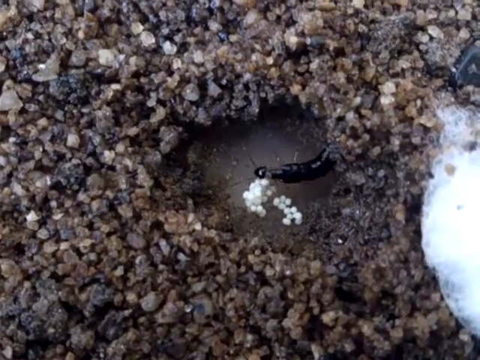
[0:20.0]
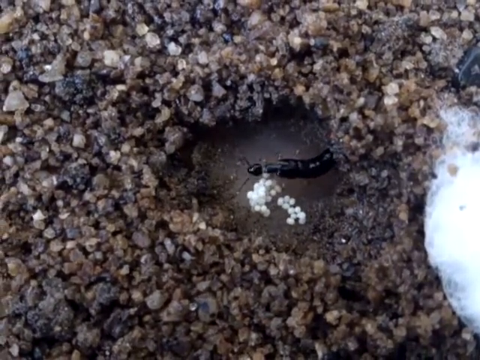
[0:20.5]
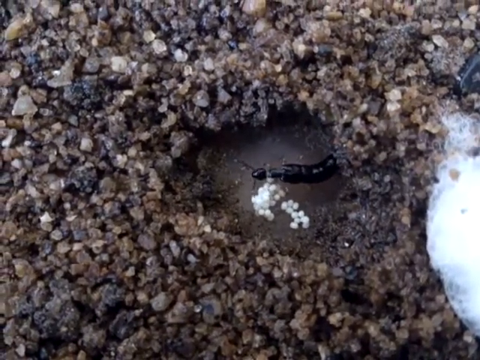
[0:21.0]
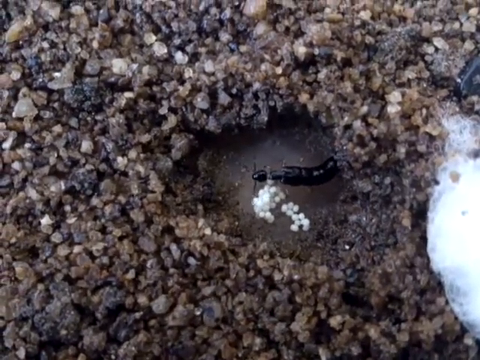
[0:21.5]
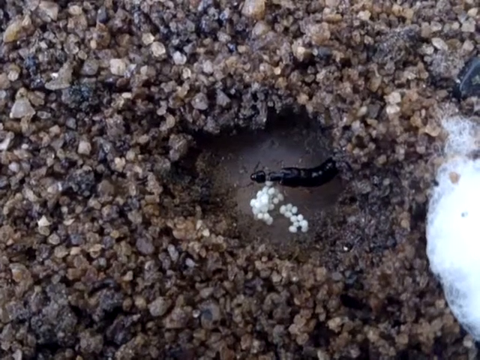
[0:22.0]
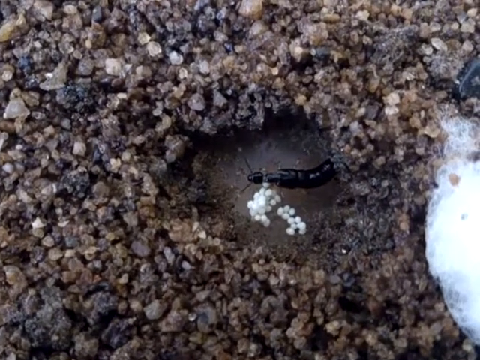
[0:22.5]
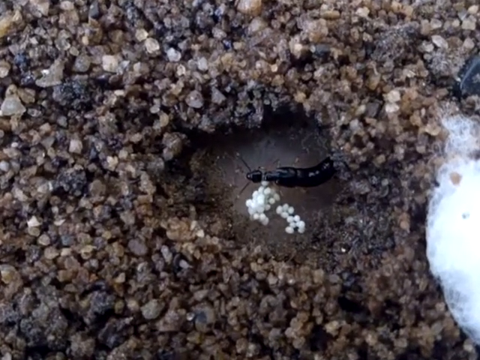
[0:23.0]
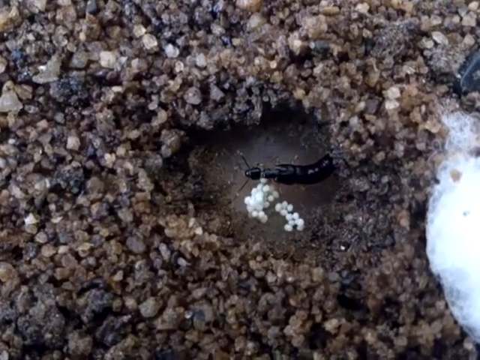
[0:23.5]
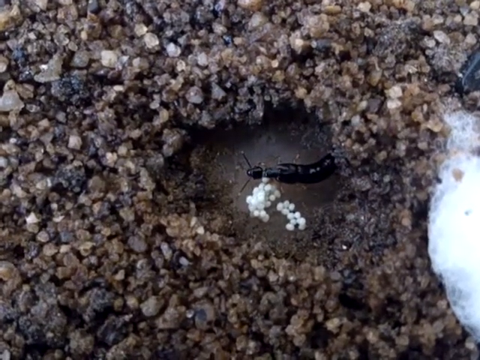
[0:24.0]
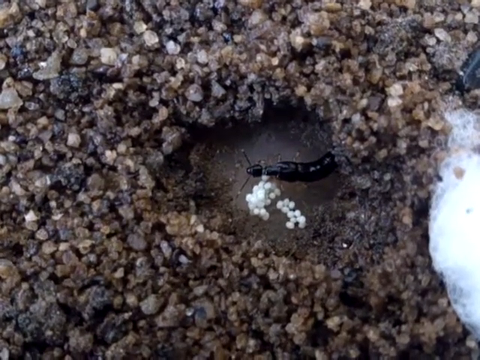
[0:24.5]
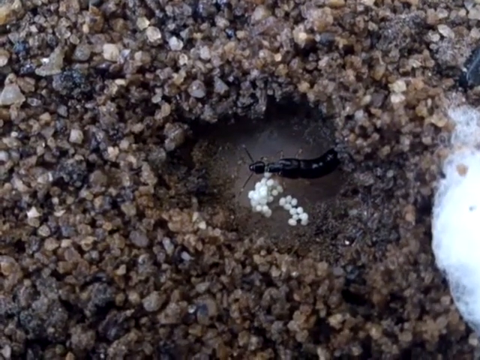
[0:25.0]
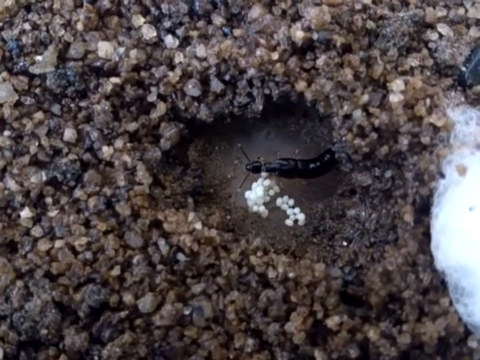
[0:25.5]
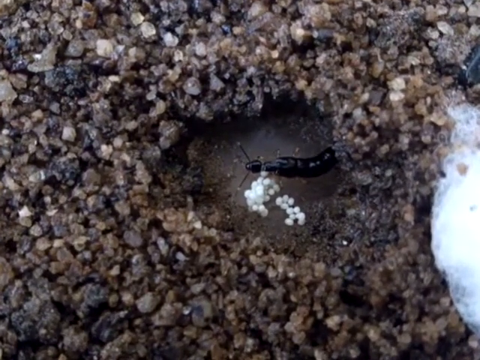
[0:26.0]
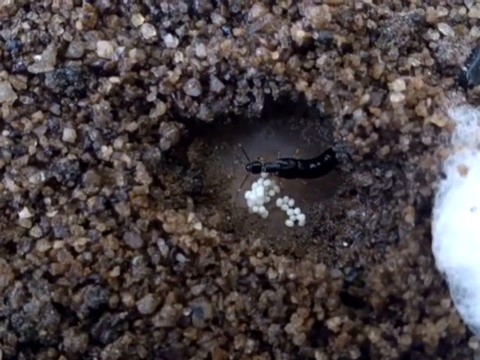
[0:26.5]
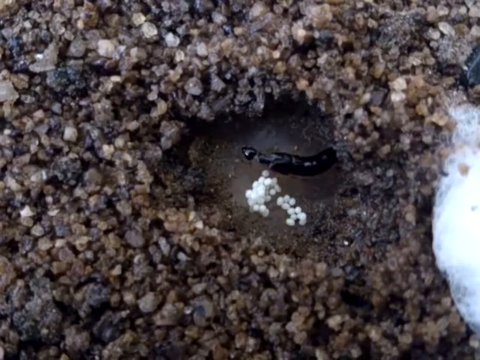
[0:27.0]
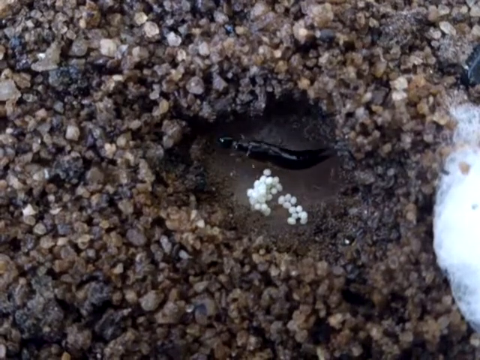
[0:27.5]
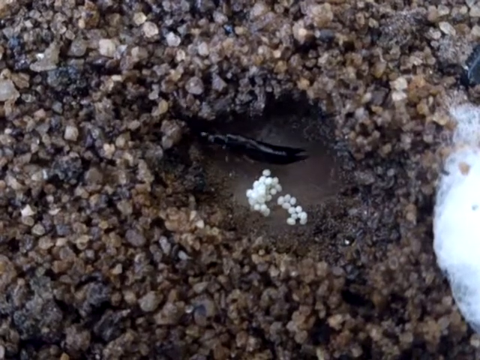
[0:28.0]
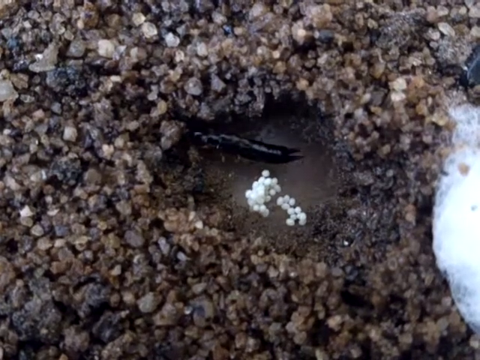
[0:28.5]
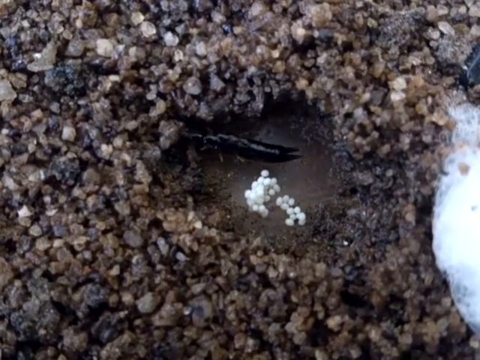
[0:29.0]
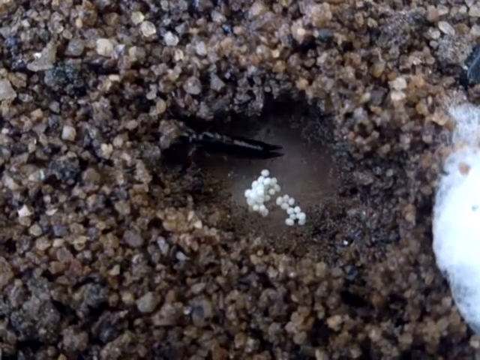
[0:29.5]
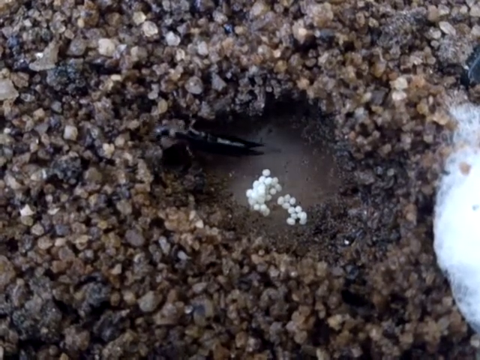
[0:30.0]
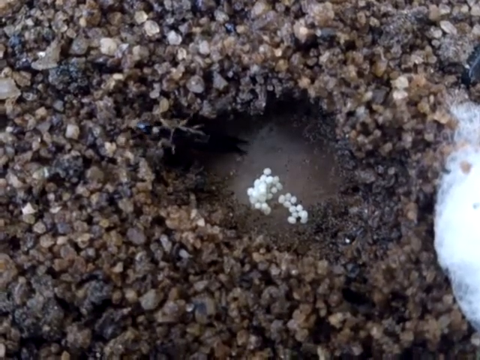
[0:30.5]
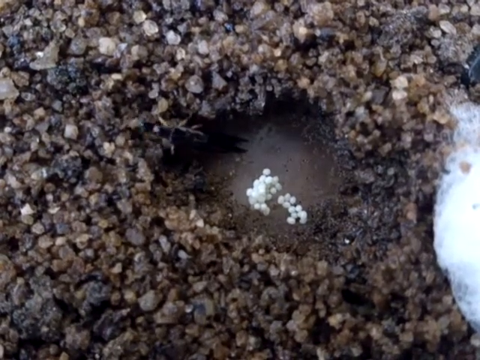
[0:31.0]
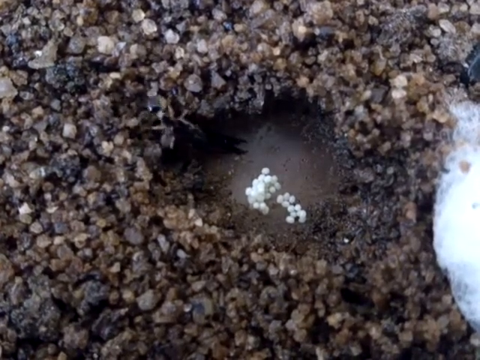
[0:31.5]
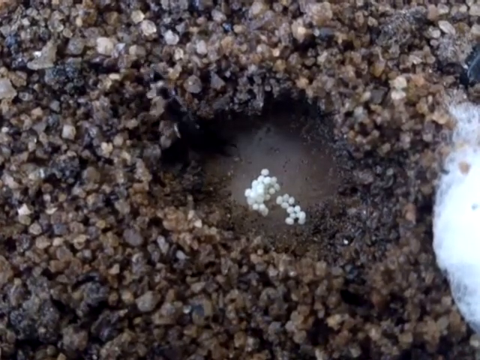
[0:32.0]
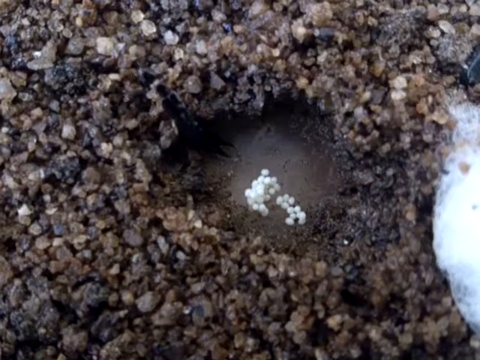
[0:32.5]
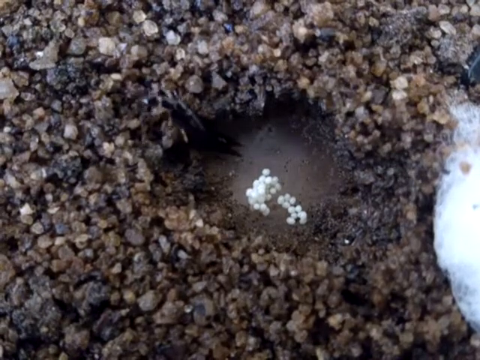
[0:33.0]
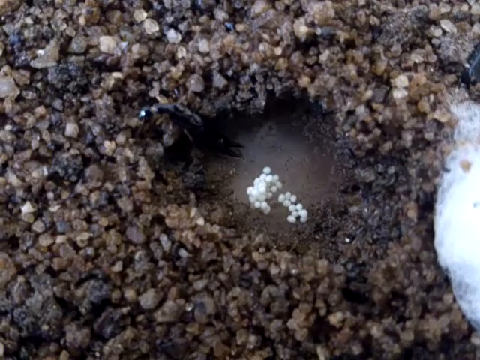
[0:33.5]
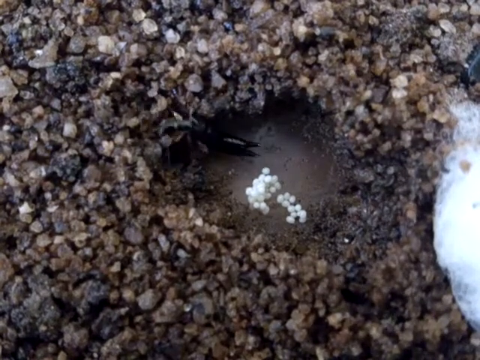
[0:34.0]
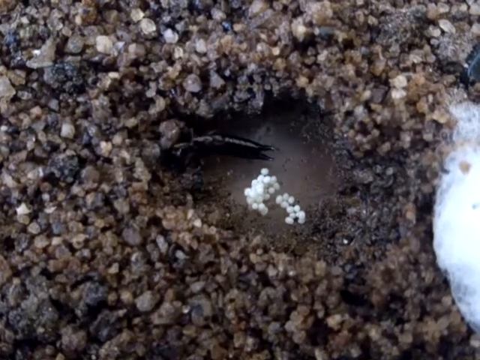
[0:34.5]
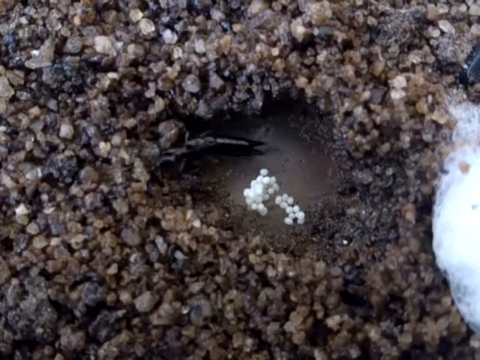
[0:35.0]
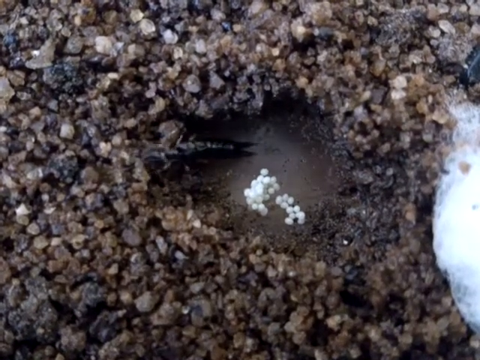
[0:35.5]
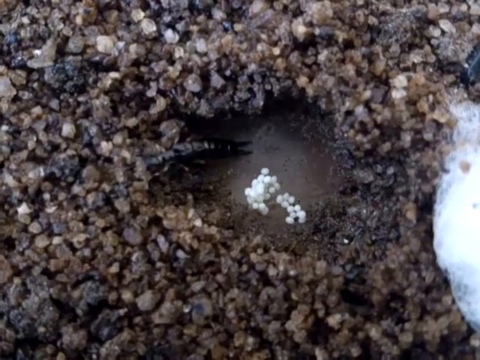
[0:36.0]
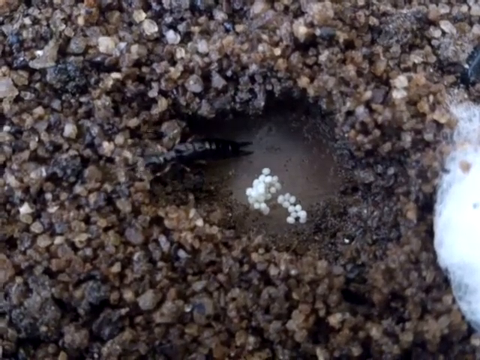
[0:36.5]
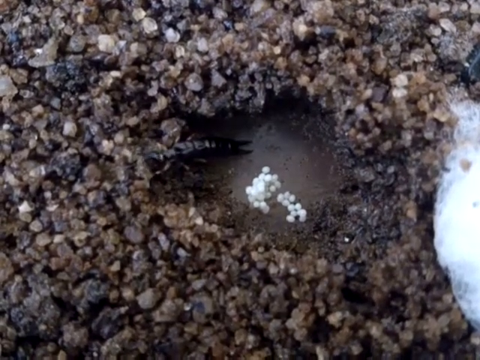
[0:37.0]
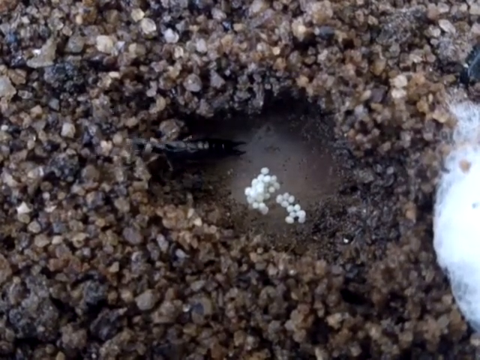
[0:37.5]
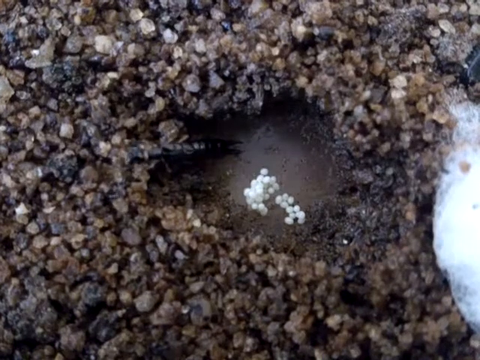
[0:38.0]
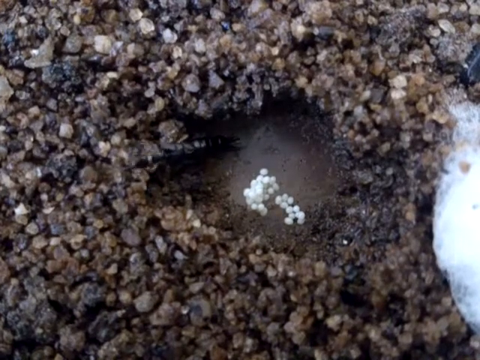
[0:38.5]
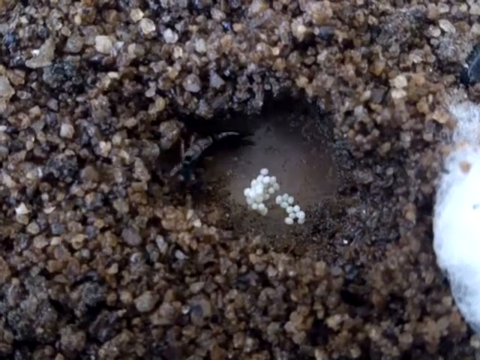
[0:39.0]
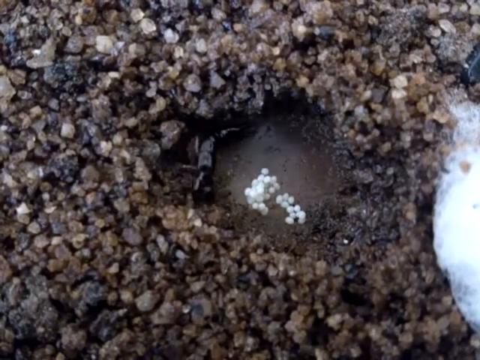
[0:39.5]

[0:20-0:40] Very gravelly wet earth has a small indentation large enough for maybe half a cup of water. Water is in the indentation, along with small white round objects that look like balls and a long black insect with long black antennas. At first the insect appears to move some of the white balls, and then it slowly climbs toward the left edge of the small pool and appears to be leaving the balls, possibly eggs, in the water. The ground surrounding it is very gravelly and wet, and everything appears very wet, as if just after a rain. The insect is black and very shiny, and nearly as long as the pool is wide.